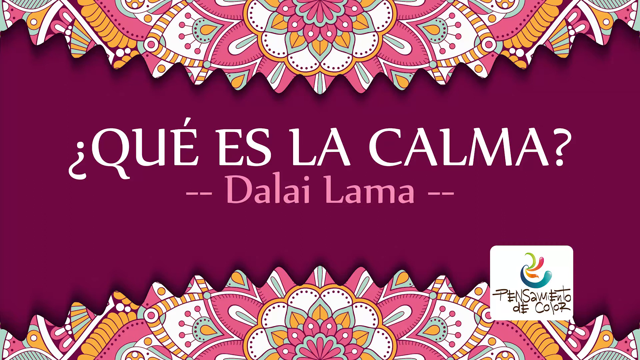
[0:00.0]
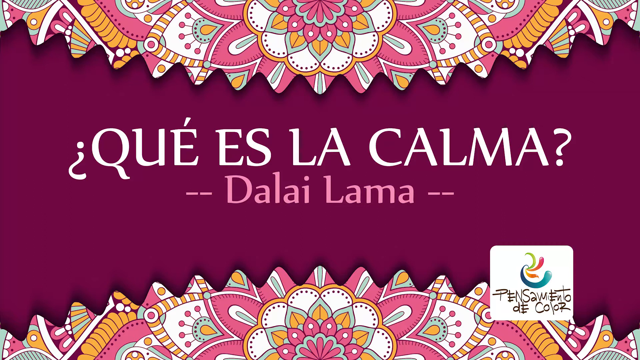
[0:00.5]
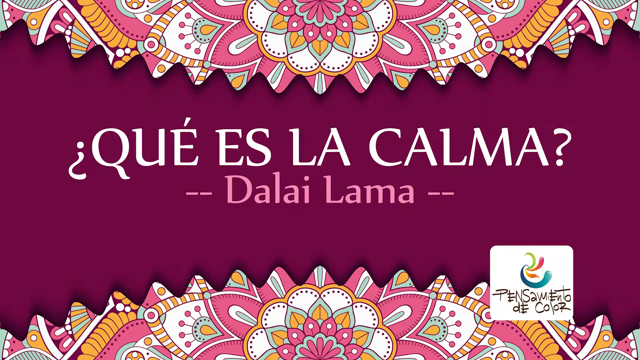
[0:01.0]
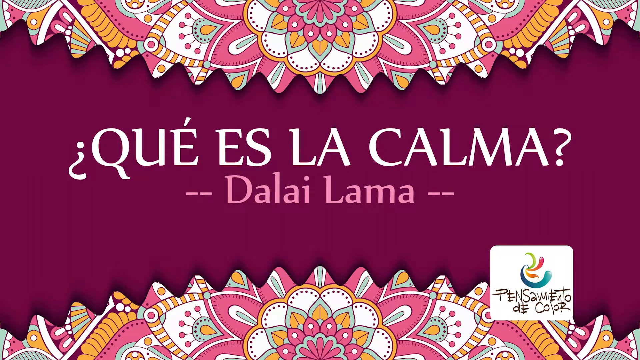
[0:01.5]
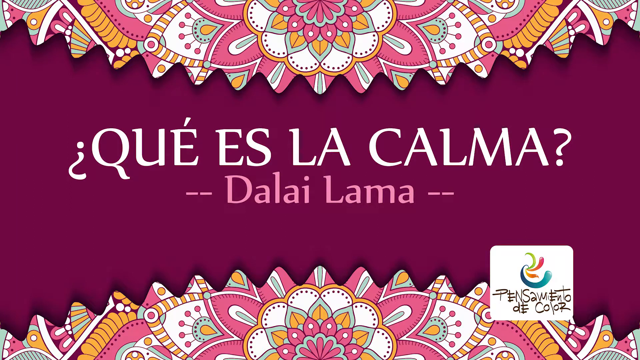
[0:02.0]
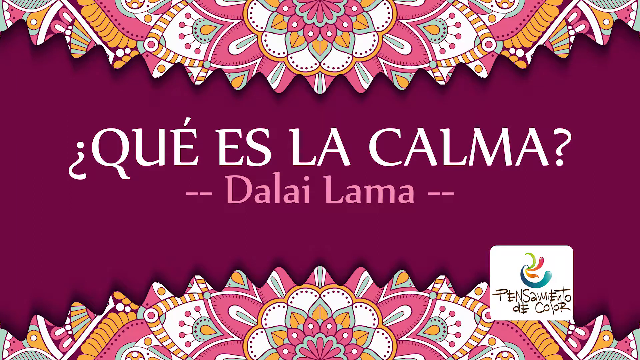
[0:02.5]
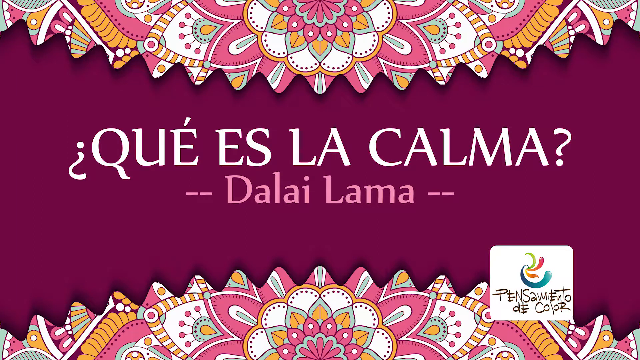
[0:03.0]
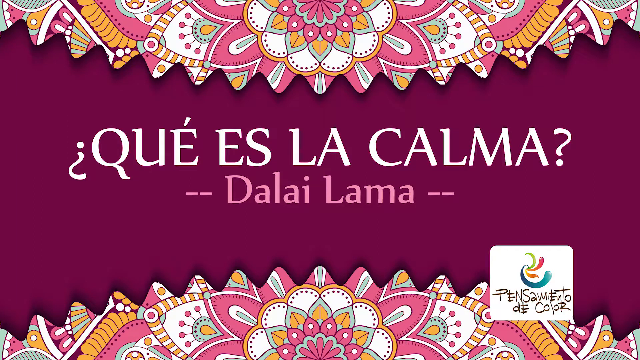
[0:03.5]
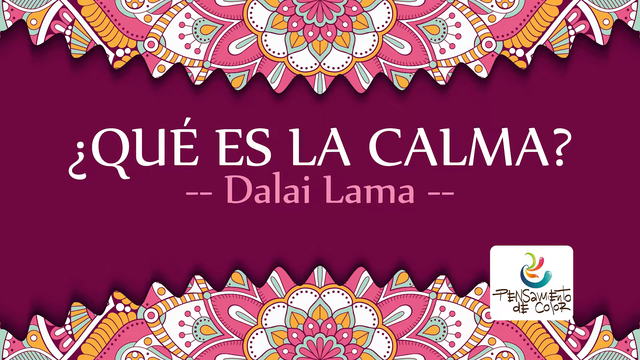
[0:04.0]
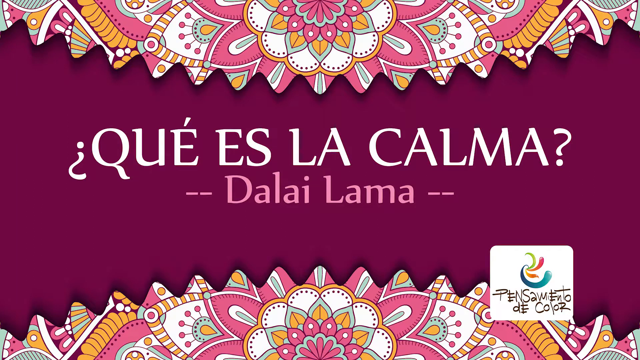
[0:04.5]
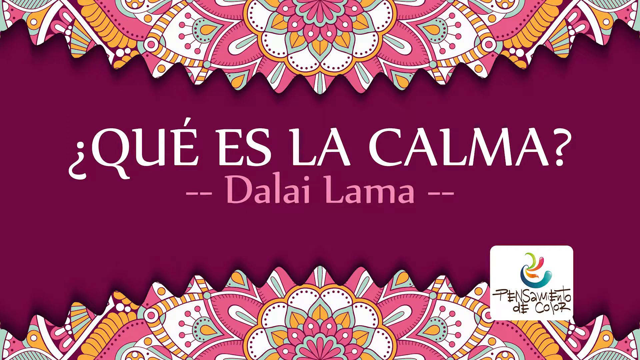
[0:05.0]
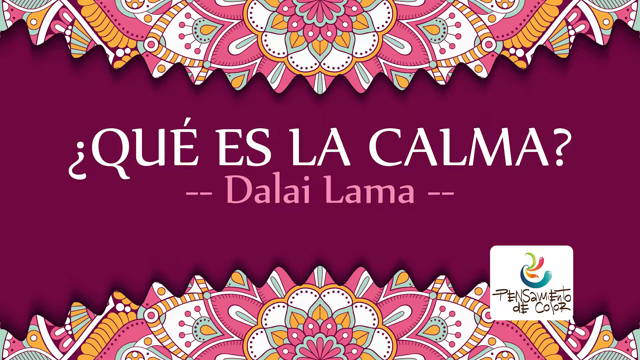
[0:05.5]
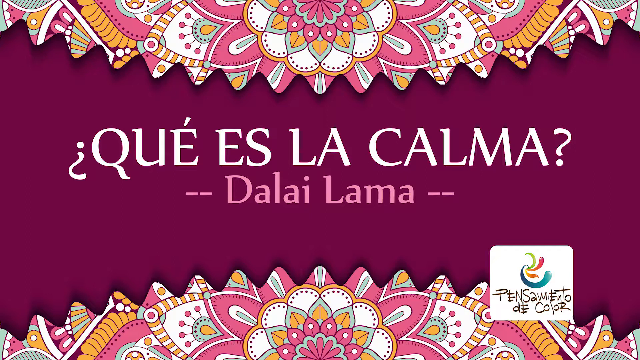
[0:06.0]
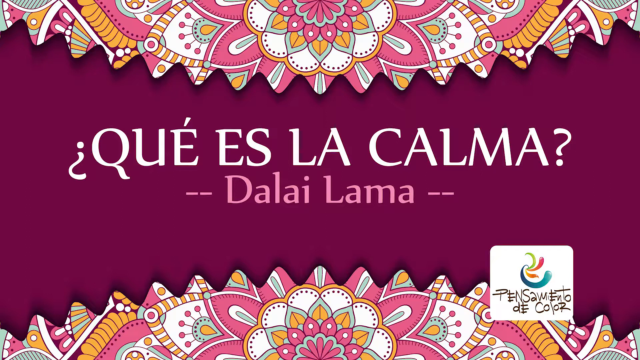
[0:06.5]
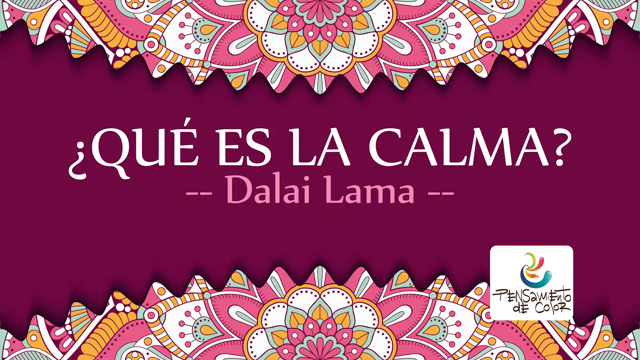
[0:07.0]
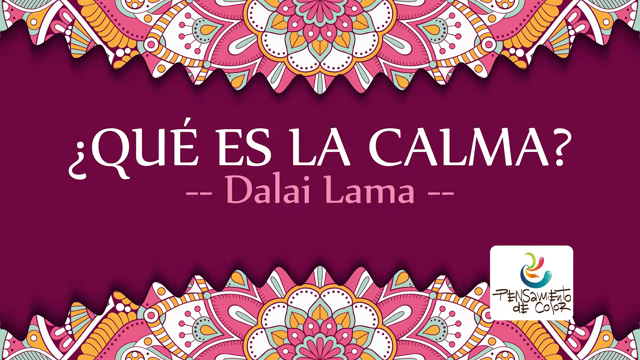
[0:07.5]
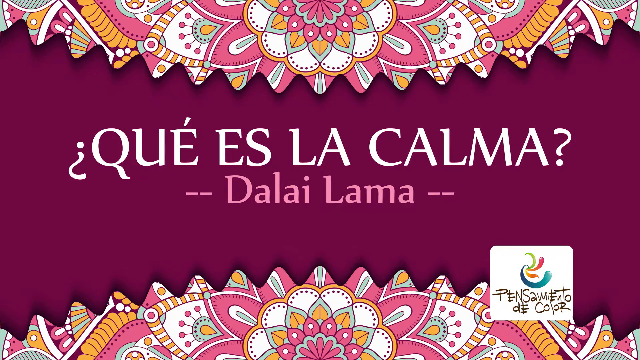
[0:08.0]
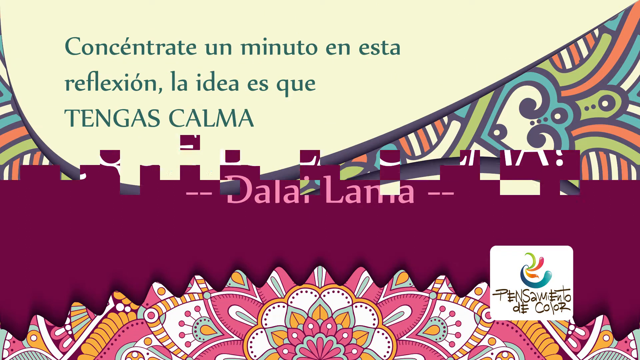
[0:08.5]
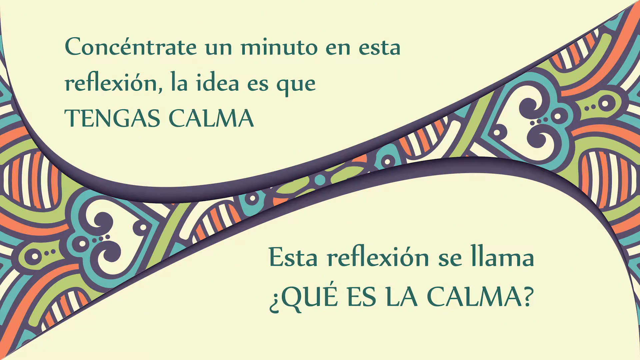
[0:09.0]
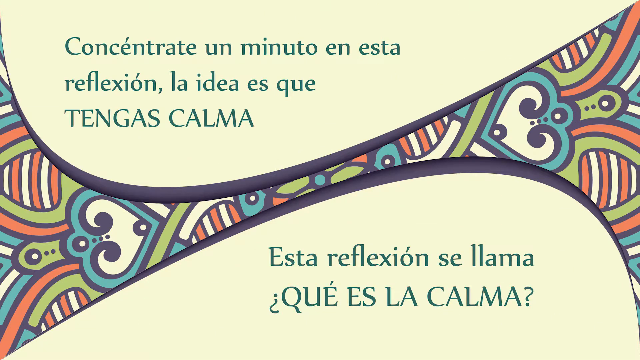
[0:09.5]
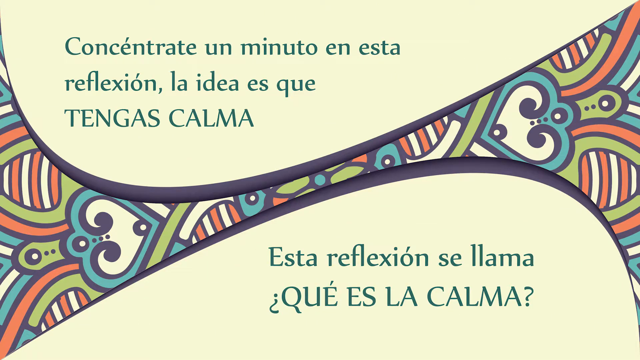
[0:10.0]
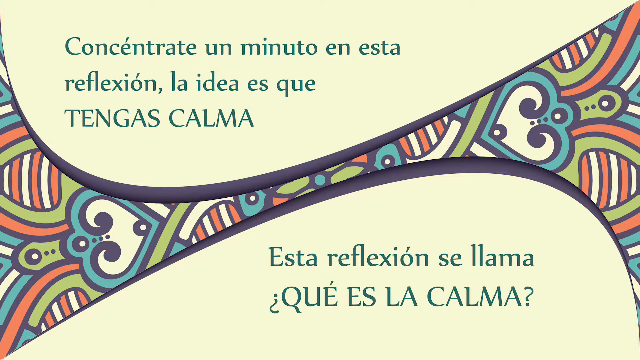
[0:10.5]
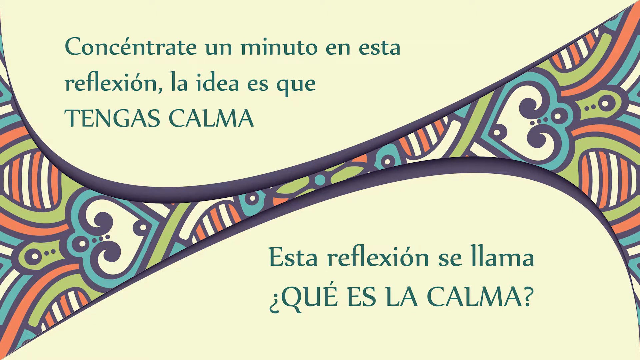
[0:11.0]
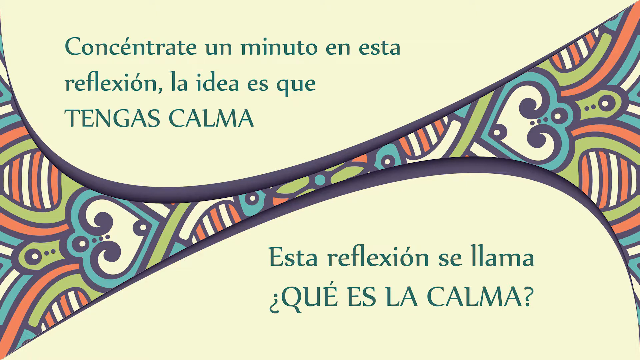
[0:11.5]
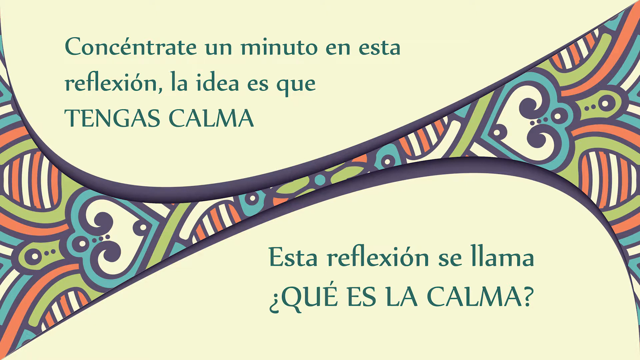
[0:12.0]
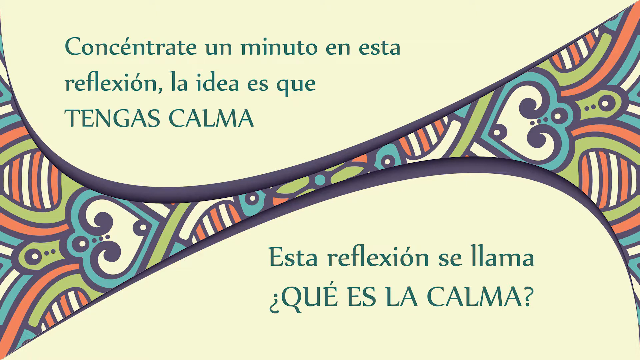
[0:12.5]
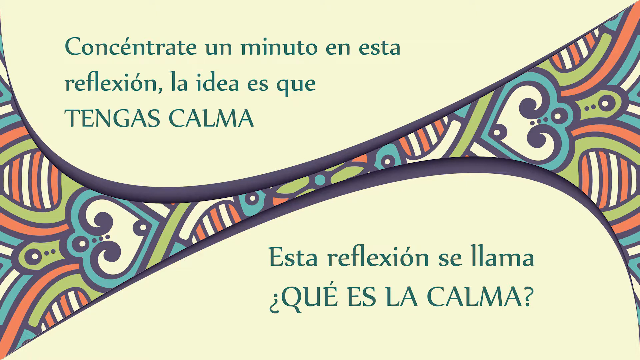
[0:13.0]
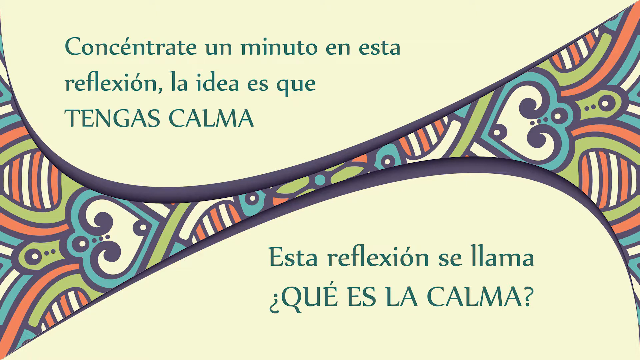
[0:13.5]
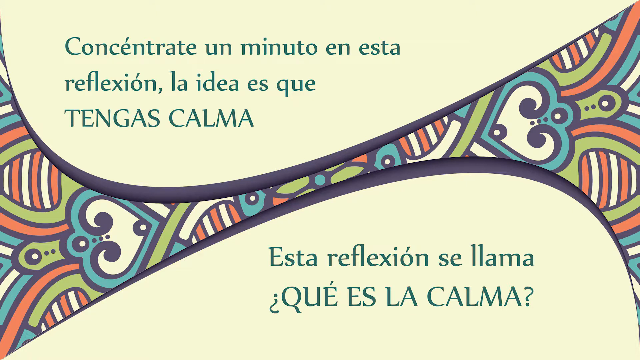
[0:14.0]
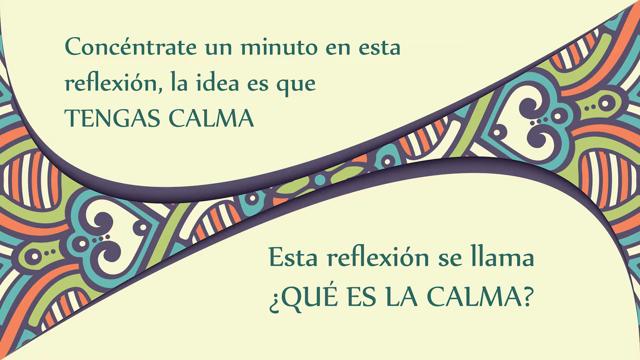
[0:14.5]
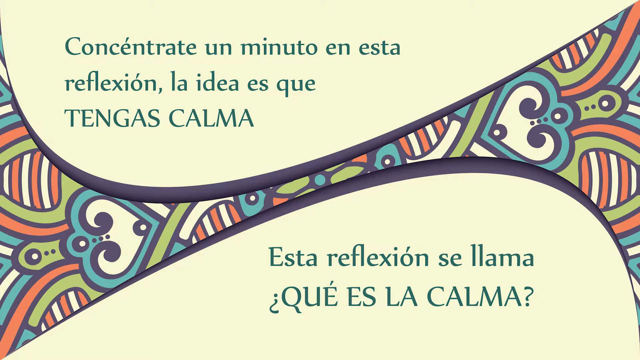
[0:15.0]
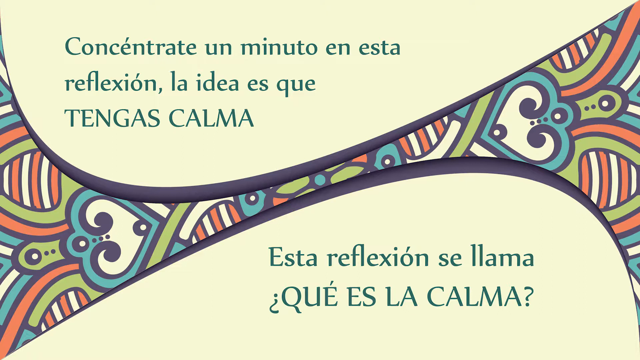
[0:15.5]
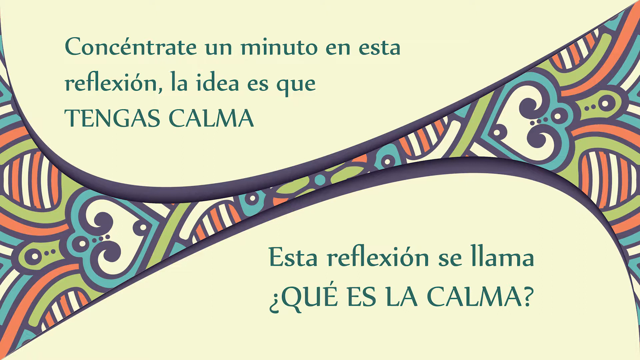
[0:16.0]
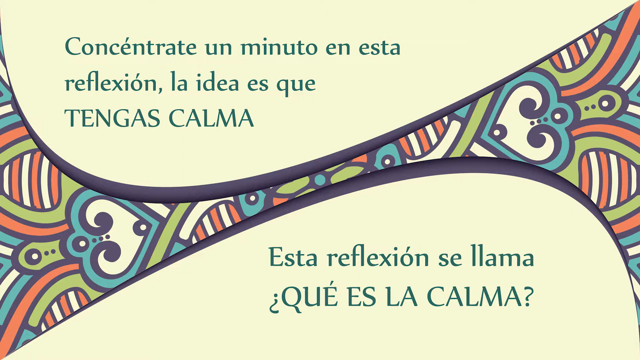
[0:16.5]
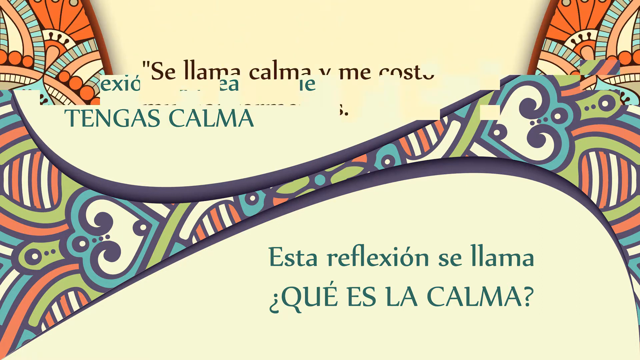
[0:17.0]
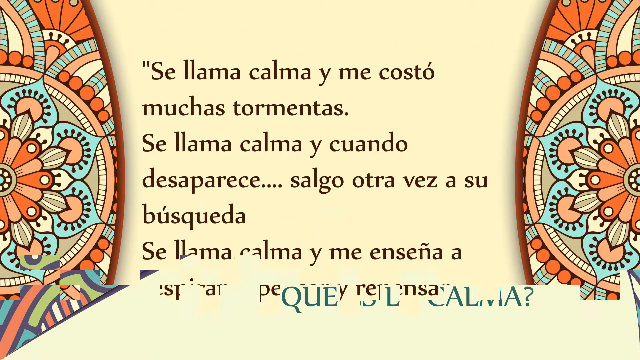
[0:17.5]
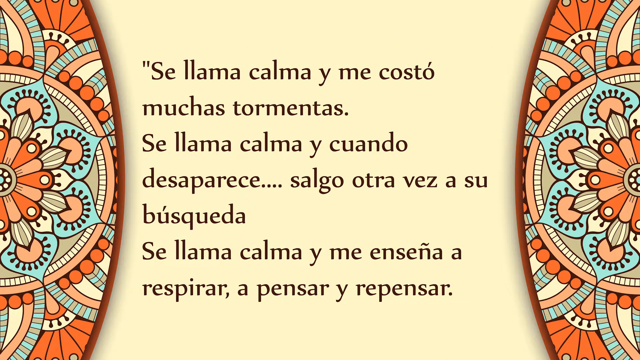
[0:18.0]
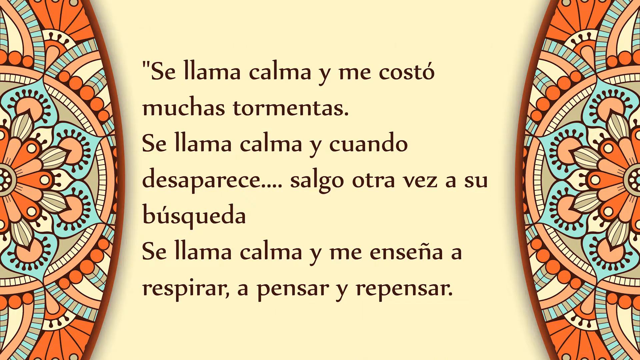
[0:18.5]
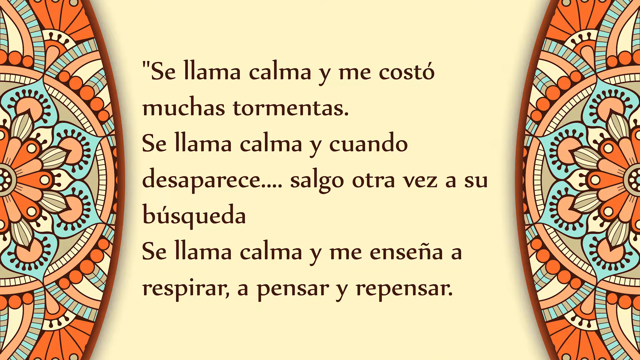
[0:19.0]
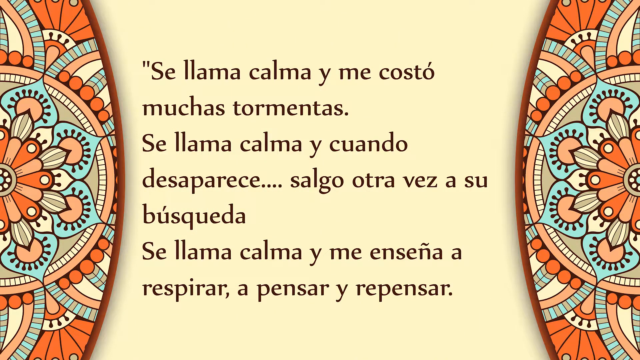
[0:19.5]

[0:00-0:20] White text appears on a maroon screen; below it is text in Spanish, and below that it says "the Dalai Lama." At the top and bottom is a mirrored image of a very colorful, intricate pattern with a floral style and stripes in pink, orange and green. In the bottom right corner is a flag or logo that says "Pensemento de color." This screen stays for several seconds, then dissolves from top to bottom into a screen with two yellow curved areas containing Spanish text, with a background of yellow, green and blue patterns, hearts and stripes between them. After several more seconds it dissolves from the top, and most of the screen becomes text on yellow: a quote in Spanish. The center curves in slightly, and on each side is a mirrored orange, blue and cream floral-type design.